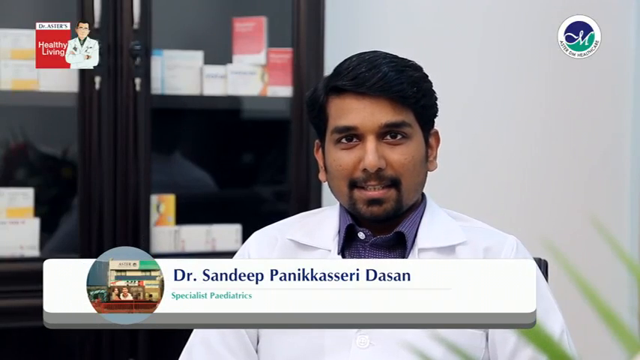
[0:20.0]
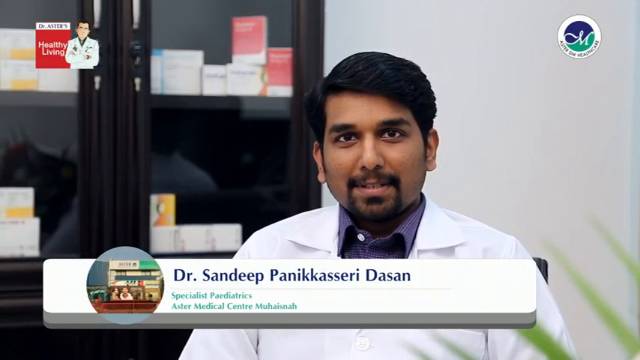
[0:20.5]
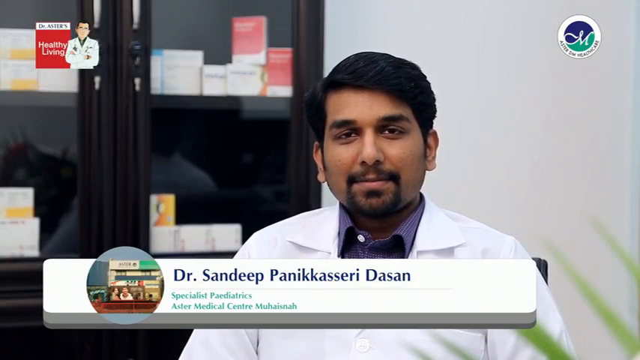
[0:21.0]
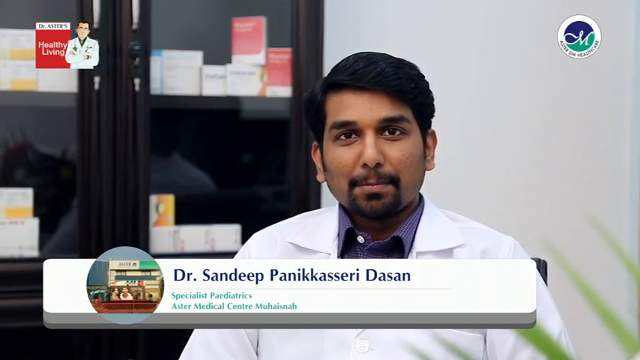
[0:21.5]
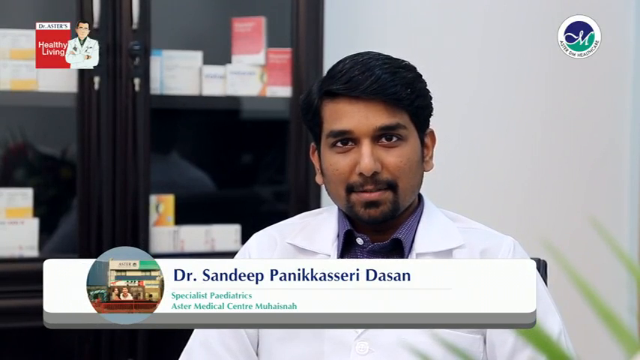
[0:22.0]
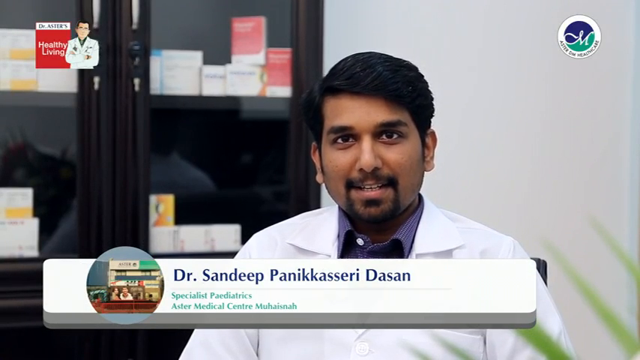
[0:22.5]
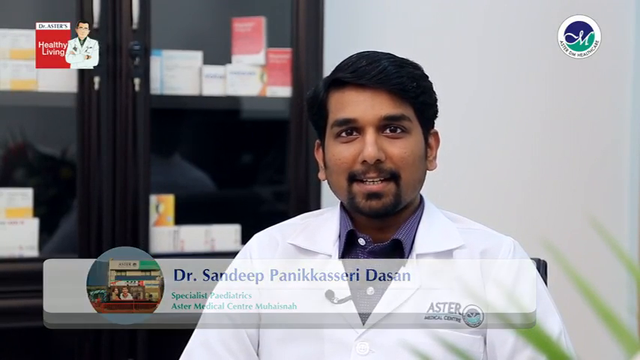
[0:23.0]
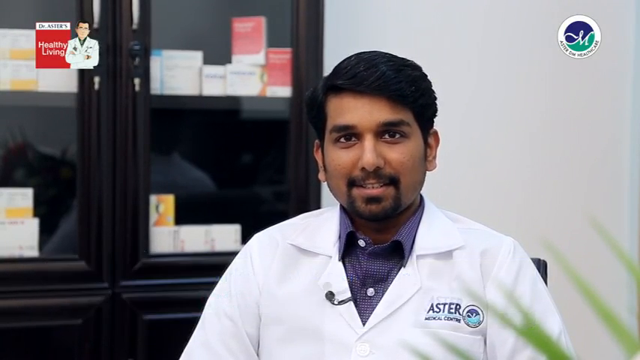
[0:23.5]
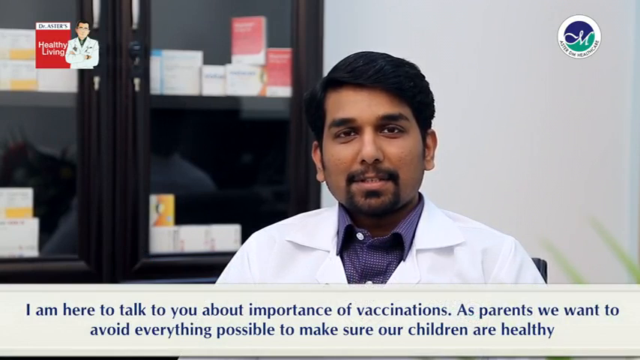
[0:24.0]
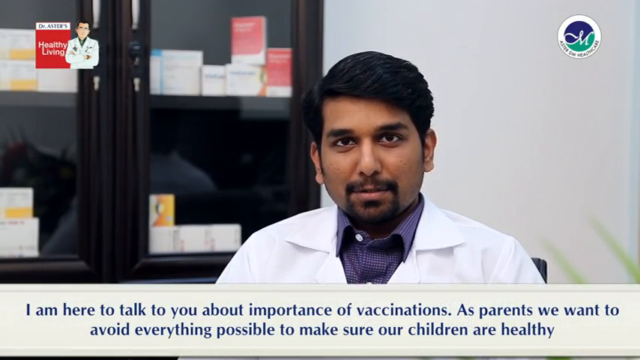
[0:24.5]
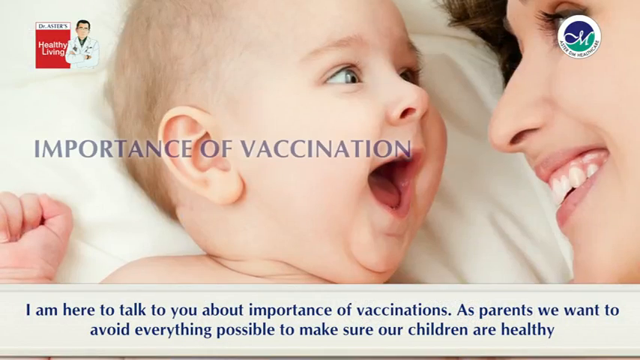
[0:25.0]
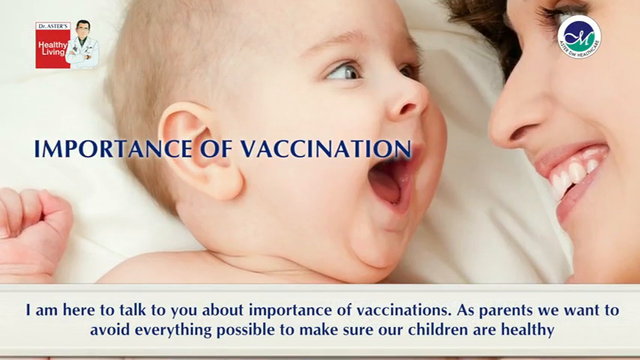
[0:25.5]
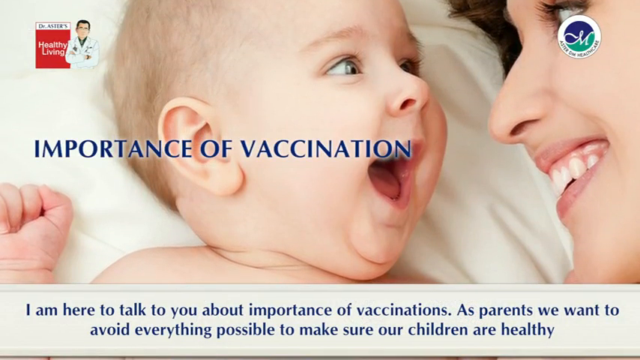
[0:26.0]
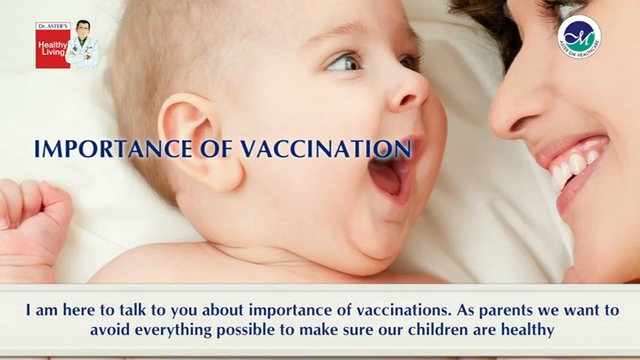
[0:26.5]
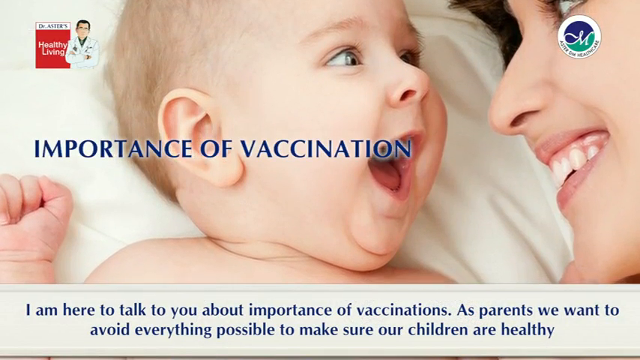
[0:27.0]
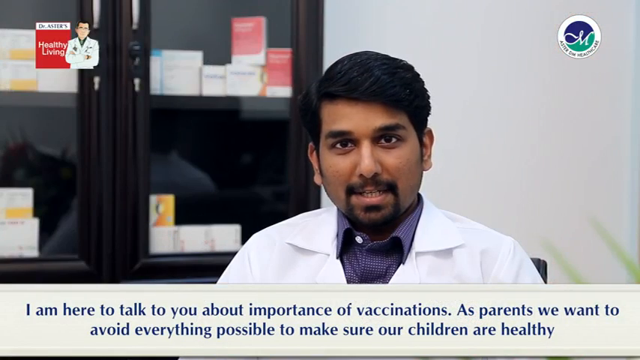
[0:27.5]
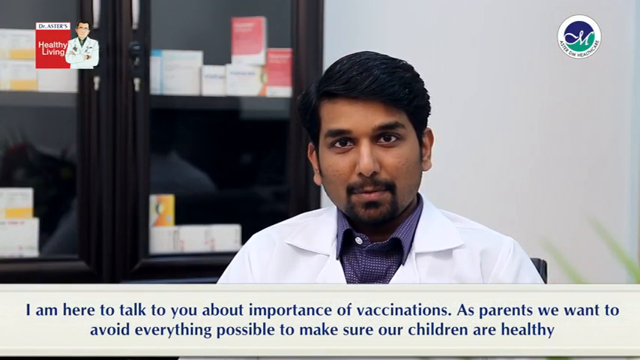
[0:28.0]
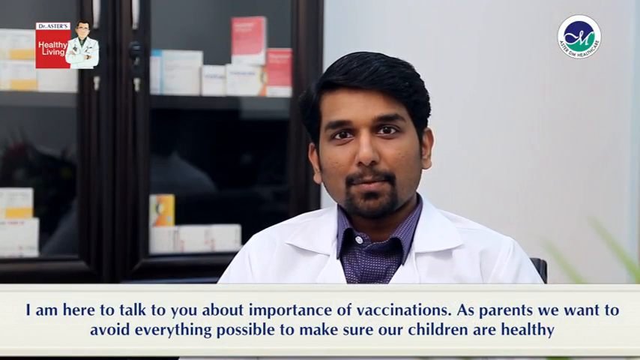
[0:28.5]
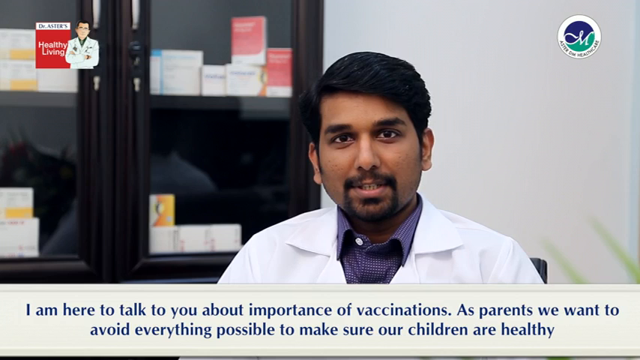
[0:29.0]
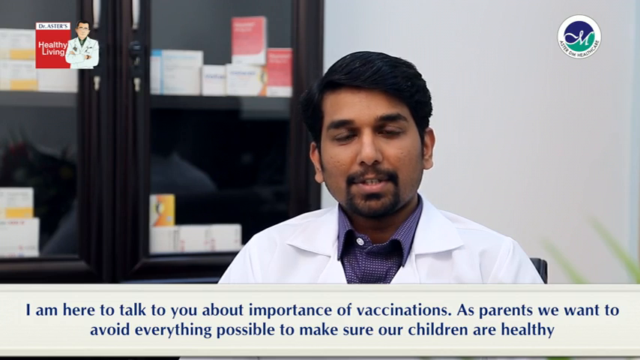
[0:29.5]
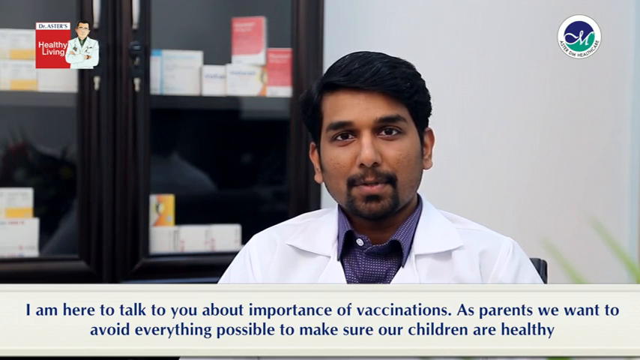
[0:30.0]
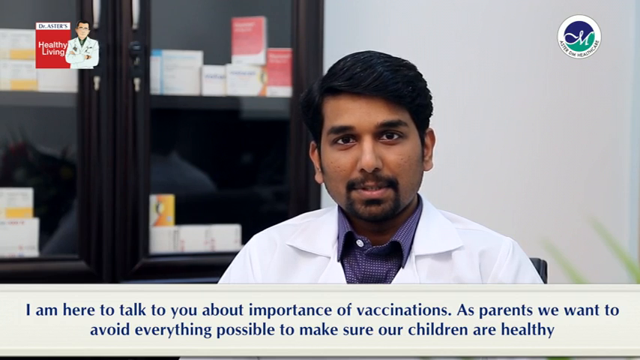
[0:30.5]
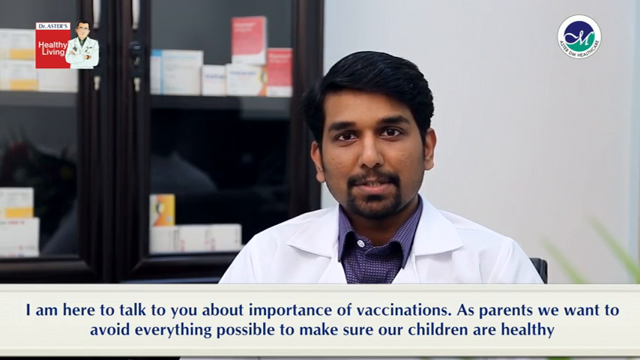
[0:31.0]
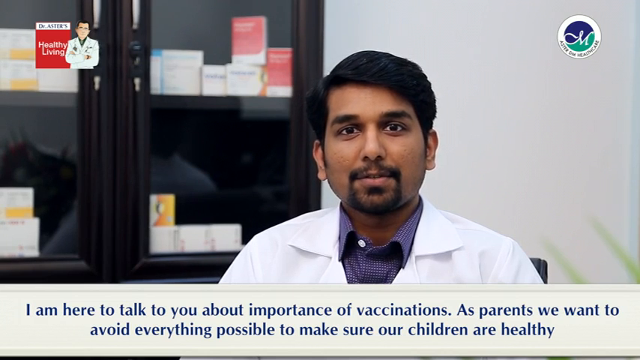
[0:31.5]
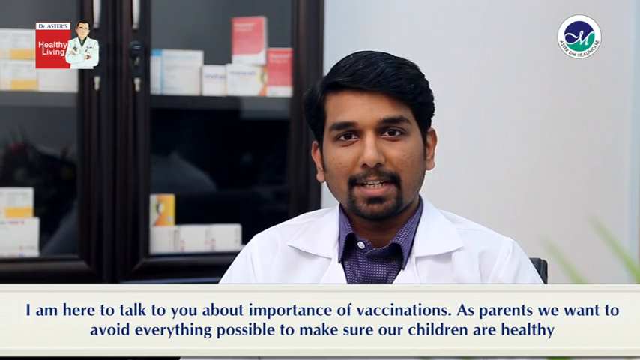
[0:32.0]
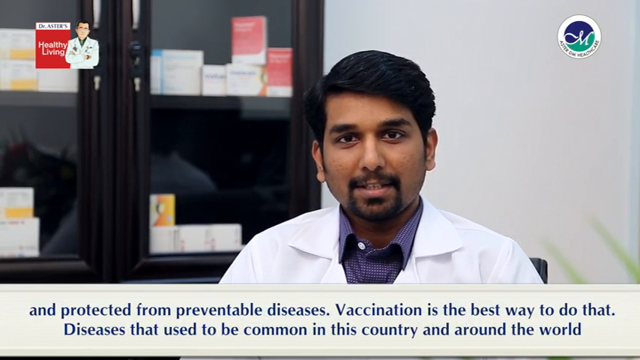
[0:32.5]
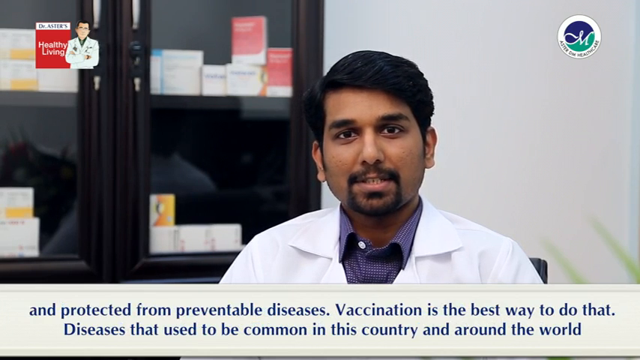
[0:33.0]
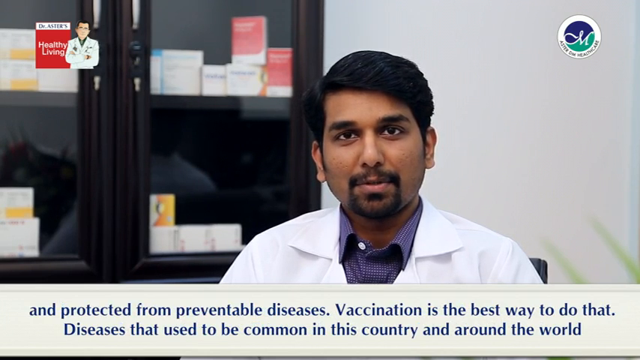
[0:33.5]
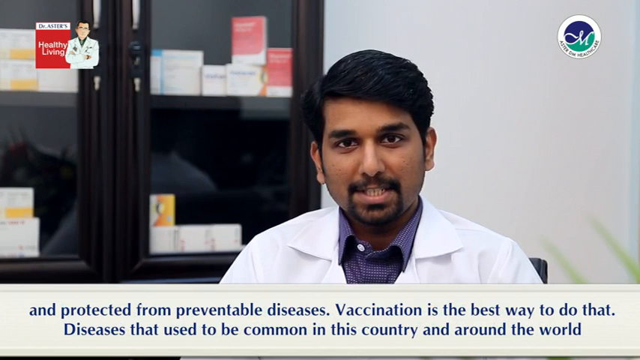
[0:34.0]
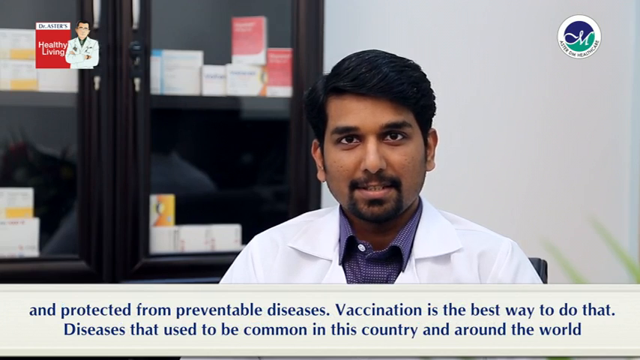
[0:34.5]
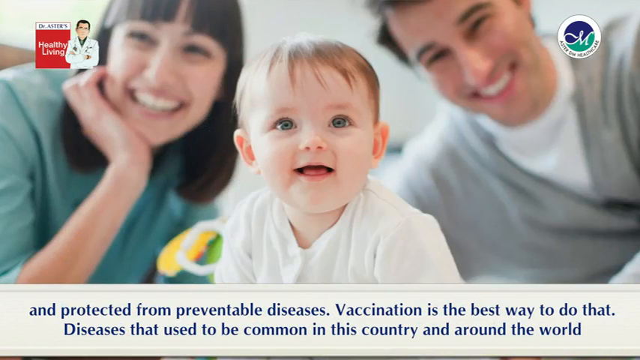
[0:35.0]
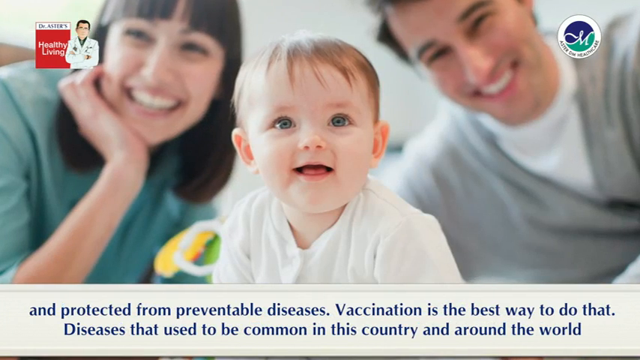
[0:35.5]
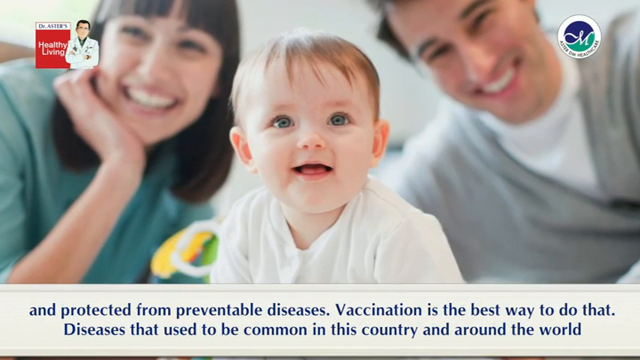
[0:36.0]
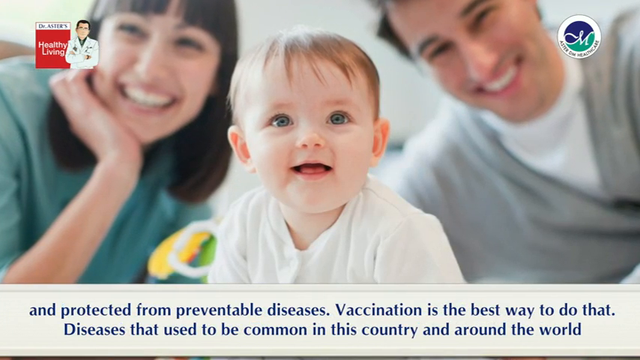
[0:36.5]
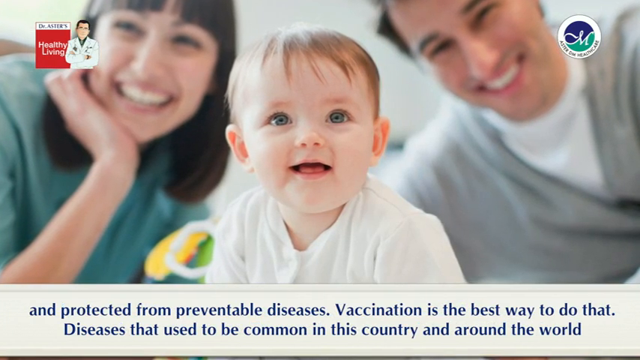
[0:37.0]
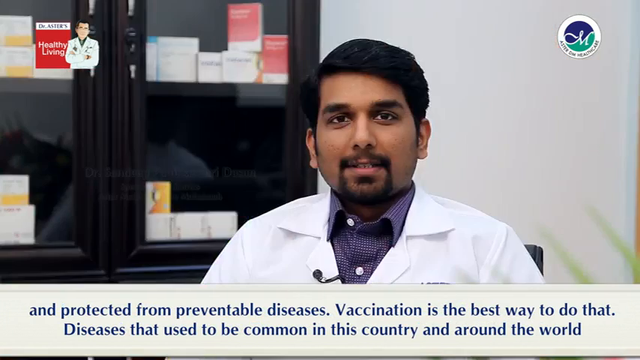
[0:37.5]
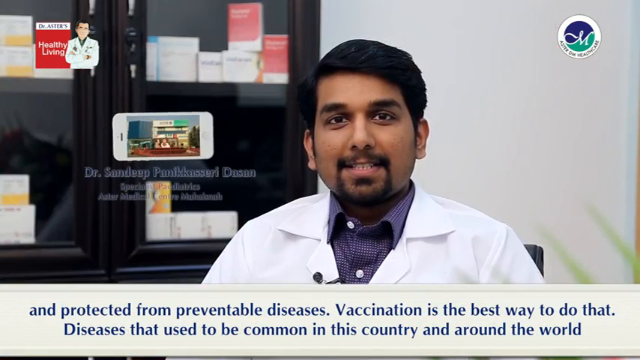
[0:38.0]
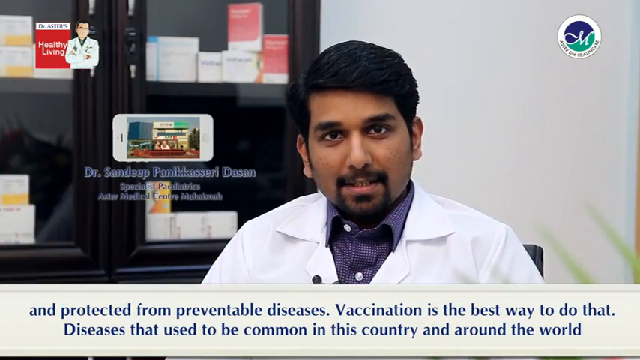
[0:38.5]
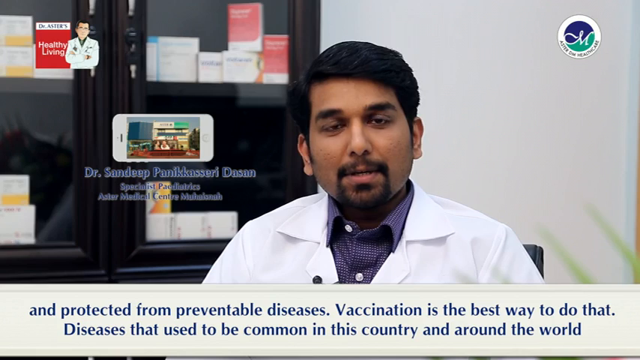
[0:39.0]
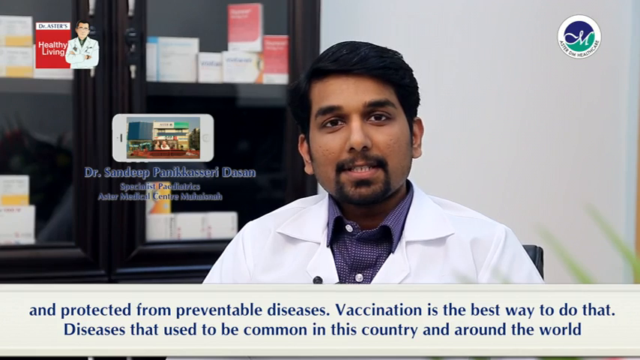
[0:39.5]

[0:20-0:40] An Indian man sits in a chair speaking to the camera. He wears a white doctor's coat over a purple button-up shirt with the top button unbuttoned. A white strip along the bottom of the screen reads "Dr. Sandeep Panikashari Dasan specialist pediatrics." Behind him in the background is a black bookcase with shelves holding different boxes of products. Text then runs along the bottom: "I'm here to talk to you about the importance of vaccinations. As parents, we want to avoid everything possible to make sure our children are healthy and protected from preventable diseases. Vaccination is the best way to do that. Diseases that used to be common in this country and around the world." While the text runs, a picture of a baby pops up, and behind him are a man and a woman; then a picture of another baby appears.